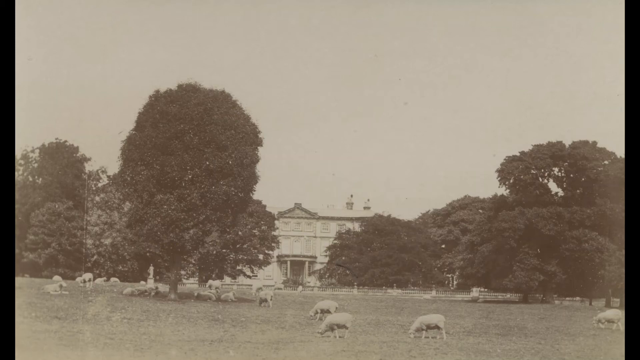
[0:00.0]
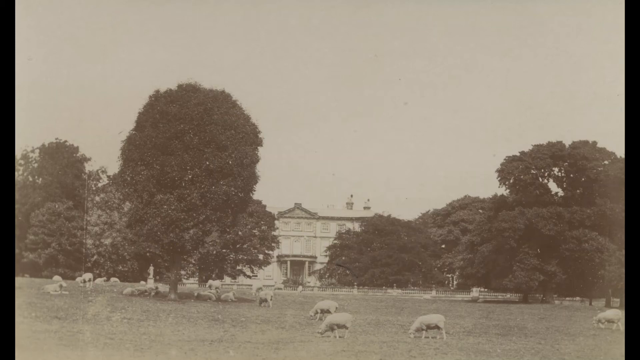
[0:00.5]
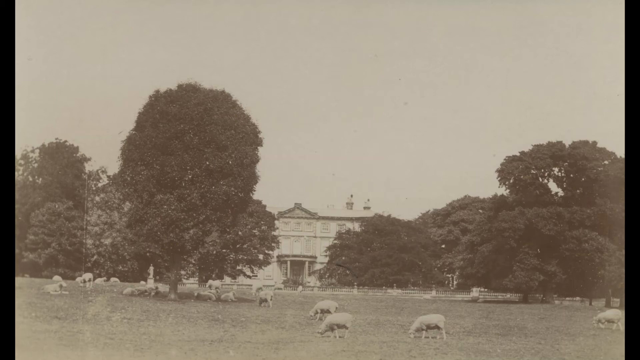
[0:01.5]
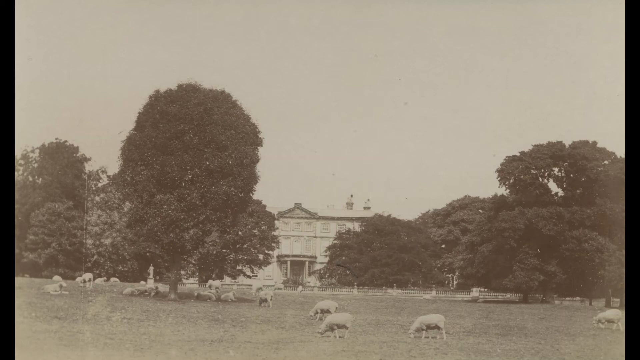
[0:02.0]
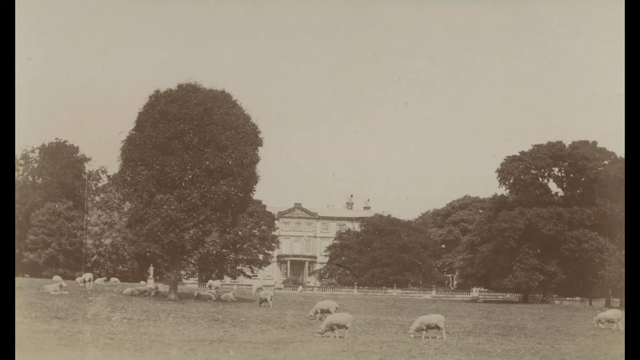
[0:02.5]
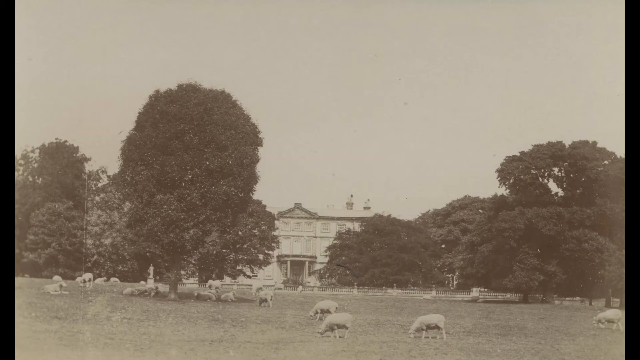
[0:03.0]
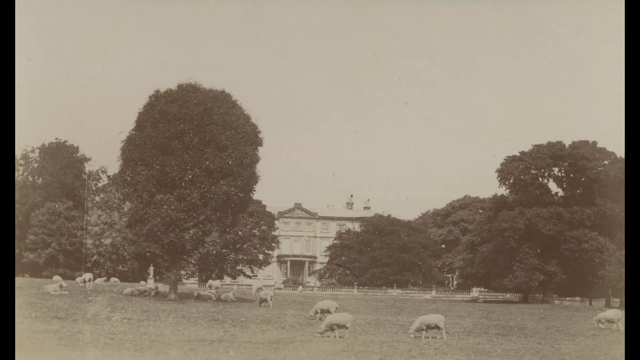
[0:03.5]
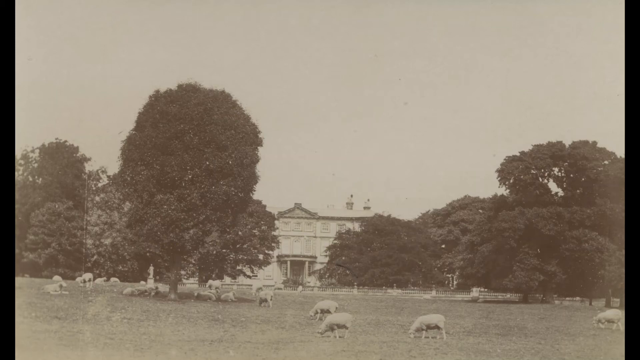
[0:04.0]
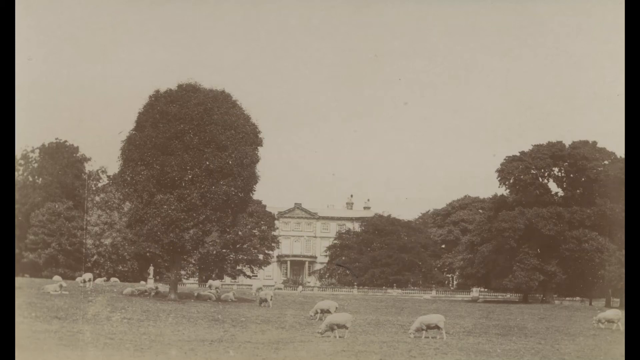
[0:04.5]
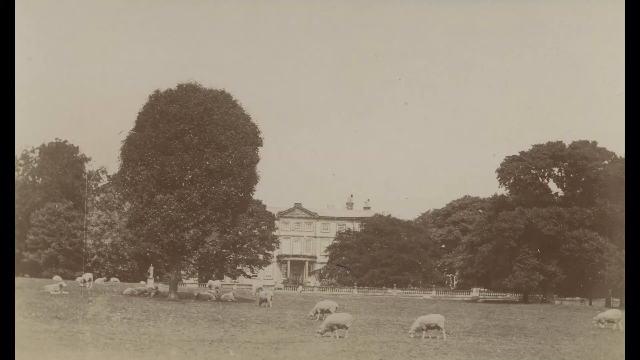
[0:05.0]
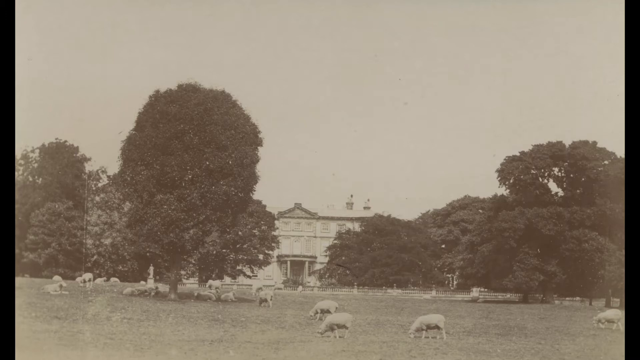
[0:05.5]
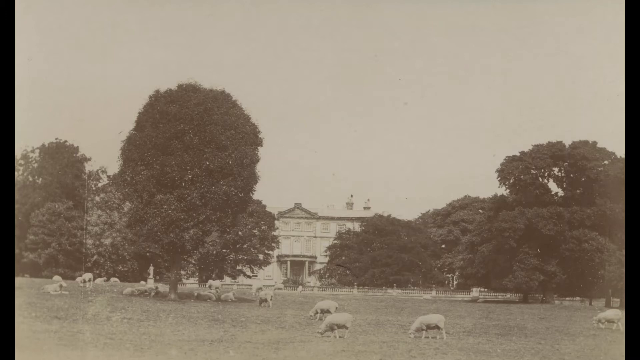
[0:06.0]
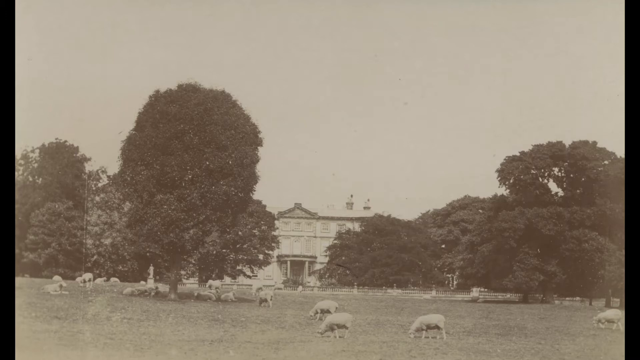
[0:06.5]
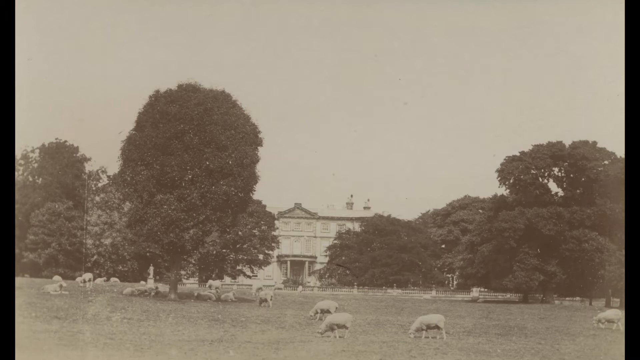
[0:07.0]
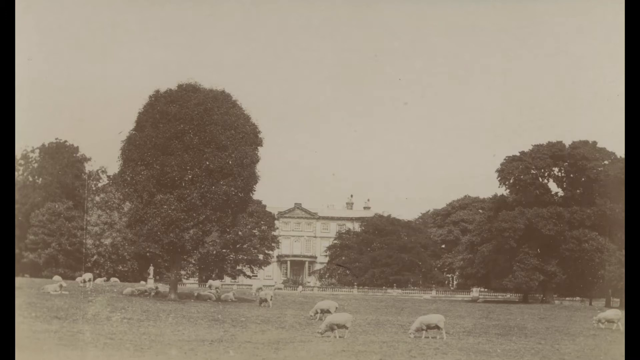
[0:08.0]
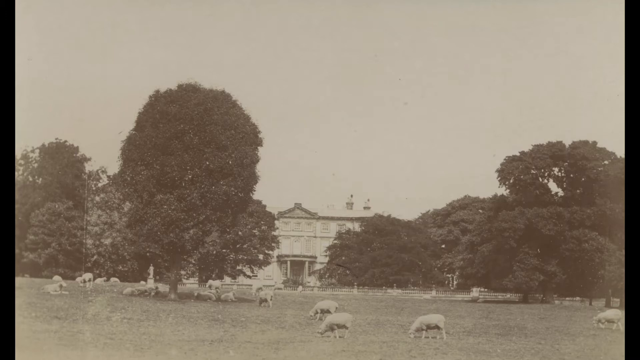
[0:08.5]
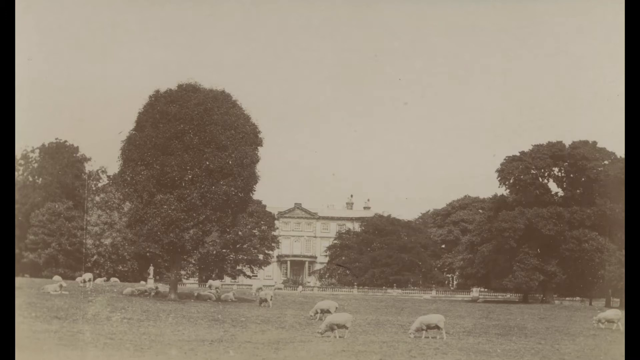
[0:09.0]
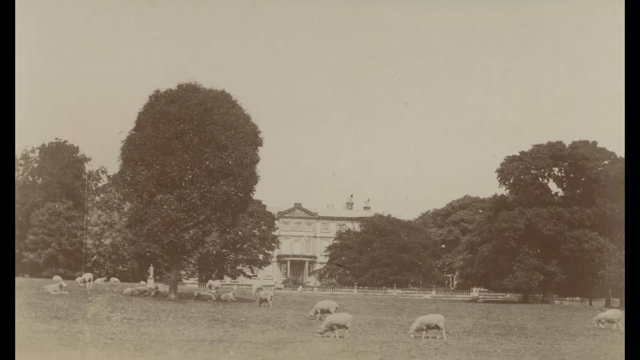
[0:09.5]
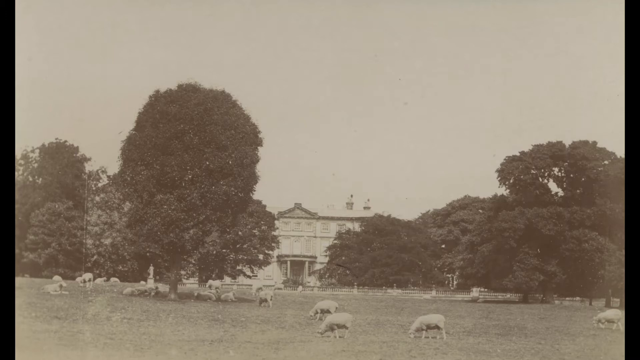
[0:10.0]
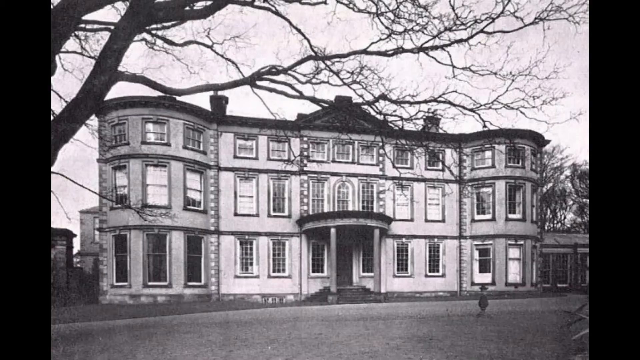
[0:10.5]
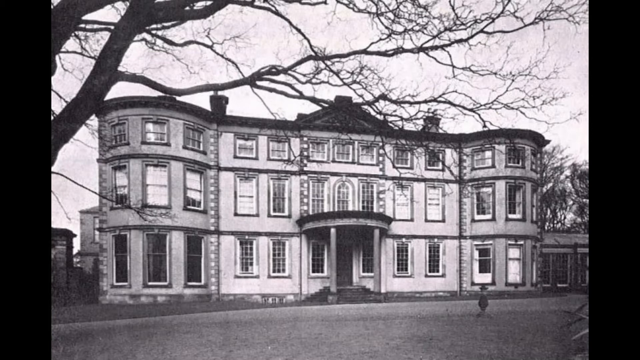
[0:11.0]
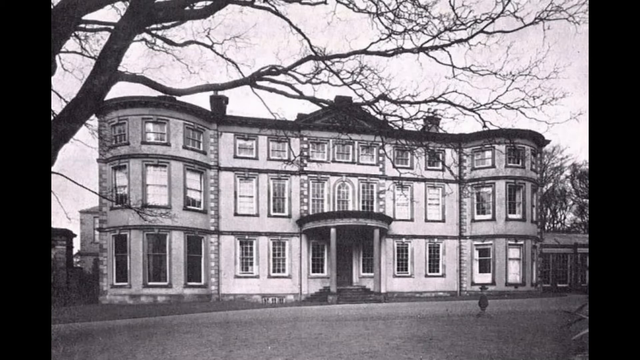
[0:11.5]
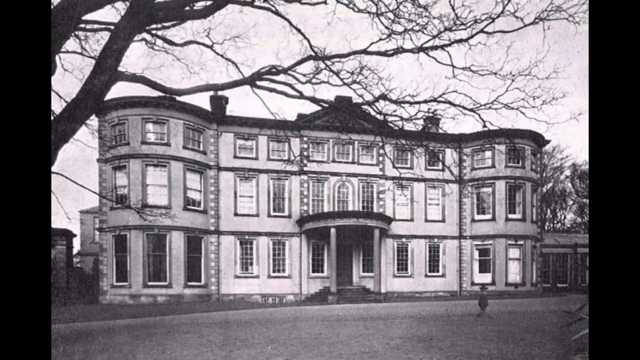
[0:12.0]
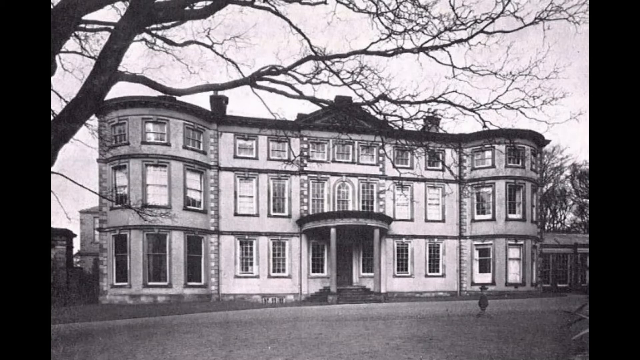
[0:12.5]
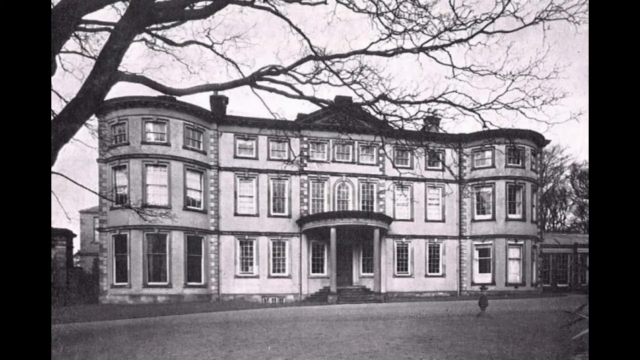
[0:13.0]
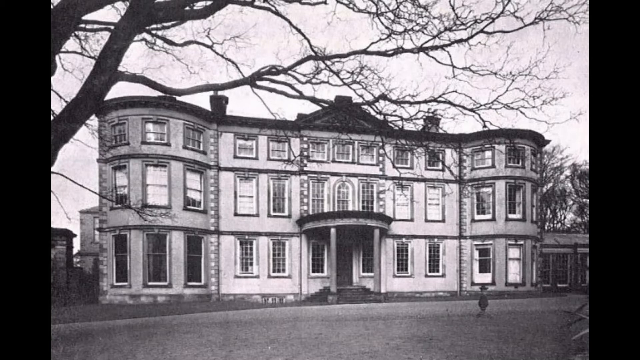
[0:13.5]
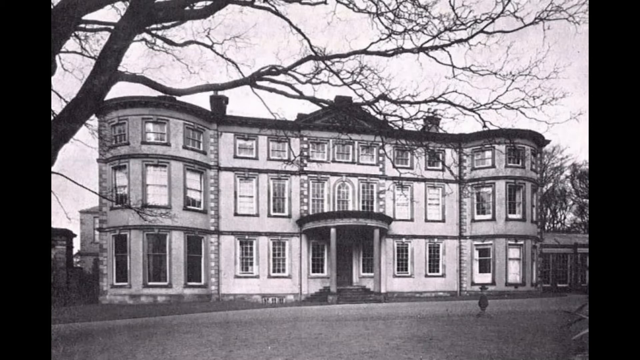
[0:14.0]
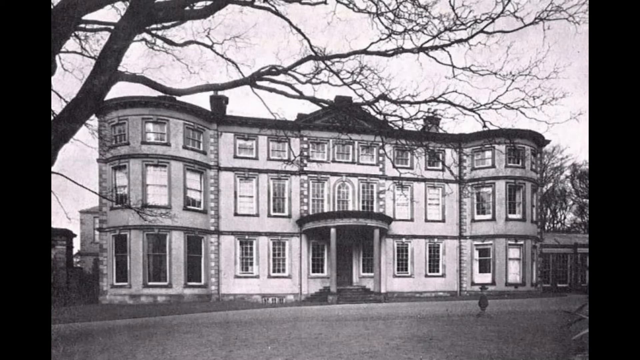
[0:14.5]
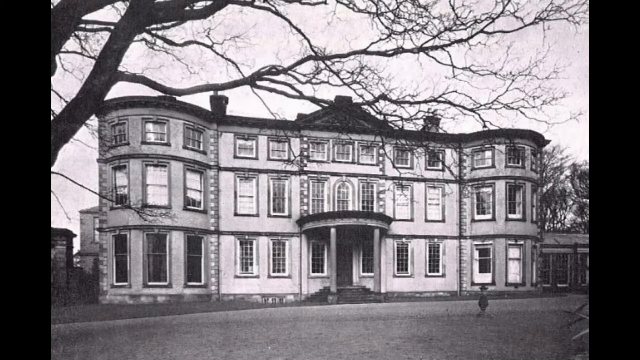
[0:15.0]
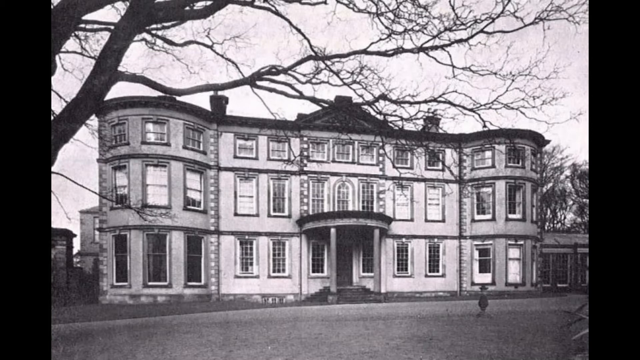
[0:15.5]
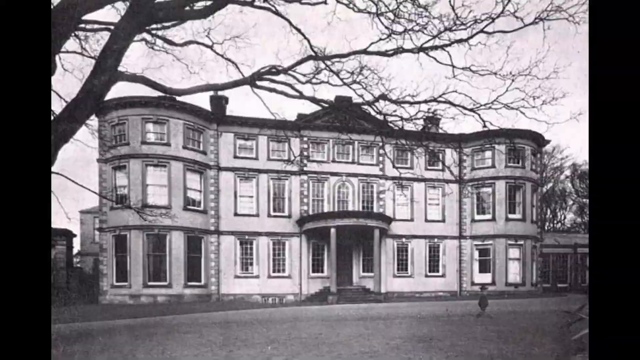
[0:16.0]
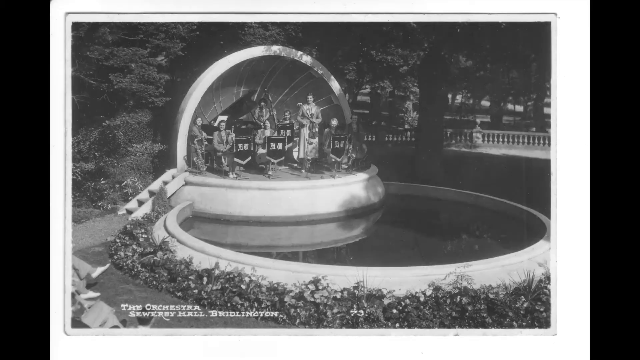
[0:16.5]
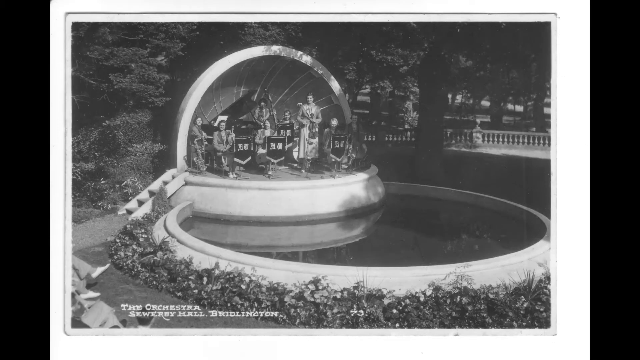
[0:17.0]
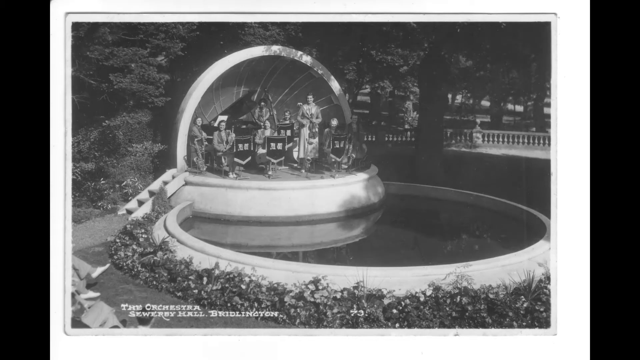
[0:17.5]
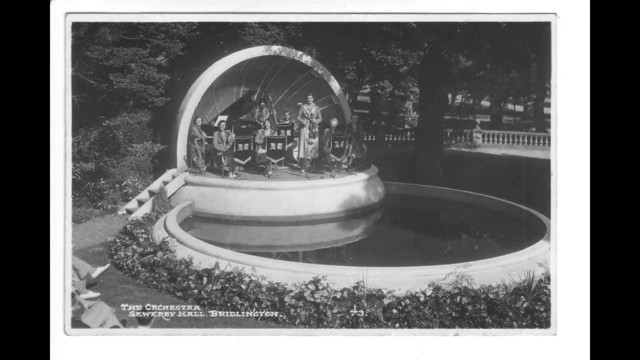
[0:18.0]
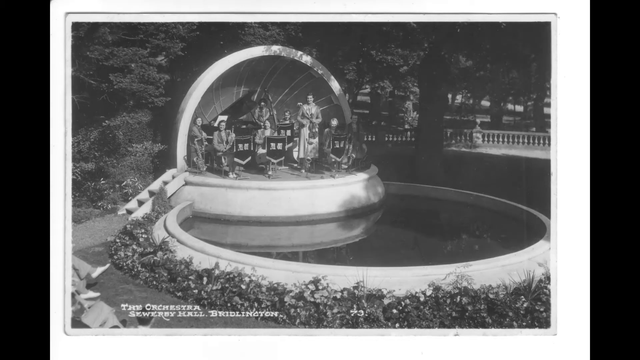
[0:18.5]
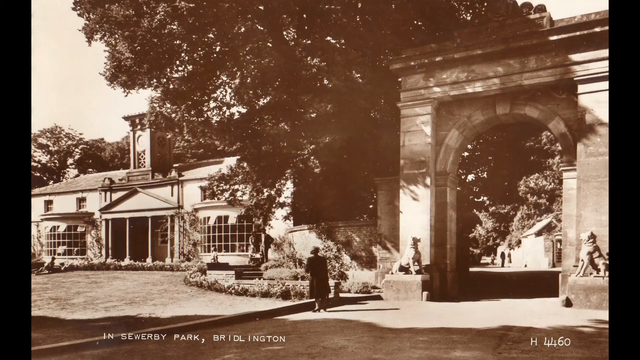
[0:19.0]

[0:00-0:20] A grainy, brown-and-white photograph shows a building in the distance with trees growing around it, and the front lawn has what appears to be a lot of sheep grazing on it. Next comes an older black-and-white photo of the same building with fewer trees growing around it, probably from an earlier time. The building is three stories tall, with a staircase of at least six or seven steps leading up to the front double doors. Above the door is a little awning for the second story, where one can come out and look out; plants decorate its edge, and it is supported by four pillars, two against the wall and two near the front of the steps. Another picture shows what appears to be a band of sorts, perhaps a school band, with what seems to be a logo flag beside them. At the bottom it says "the Orchestra Sewery Hall Bridleton". One more brown-and-white picture of the location shows a person standing near the building. They seem to perhaps be at an entrance on the right side, having come through an entranceway, or perhaps this is the back, since the front of the building looks a bit different.